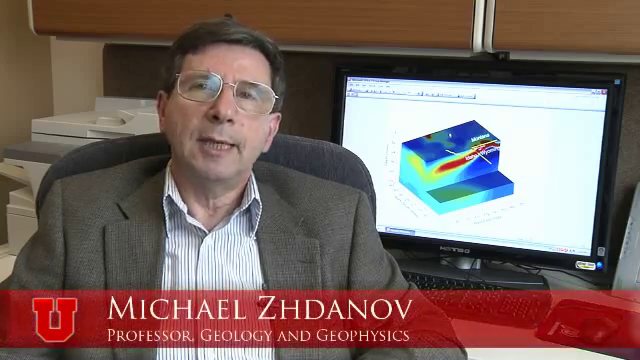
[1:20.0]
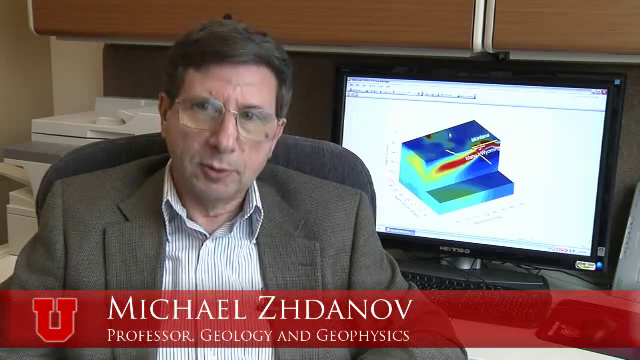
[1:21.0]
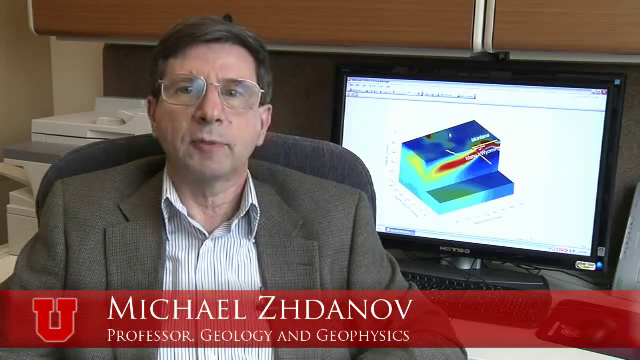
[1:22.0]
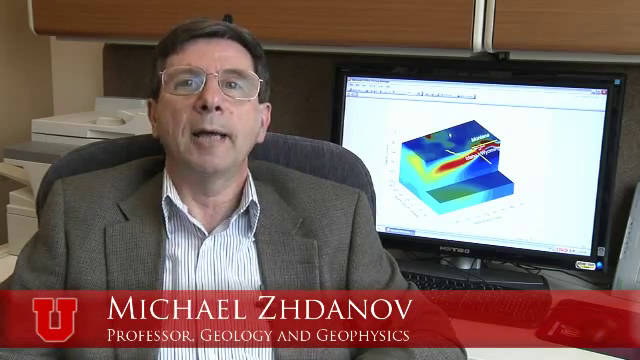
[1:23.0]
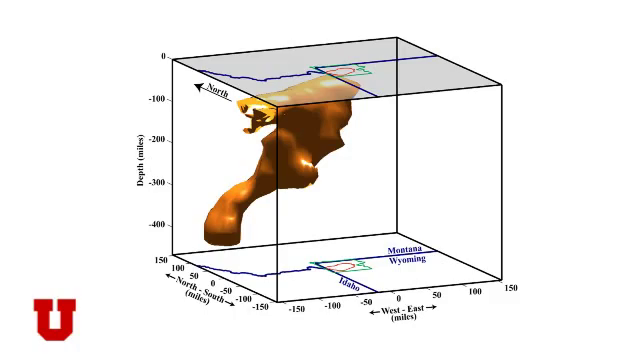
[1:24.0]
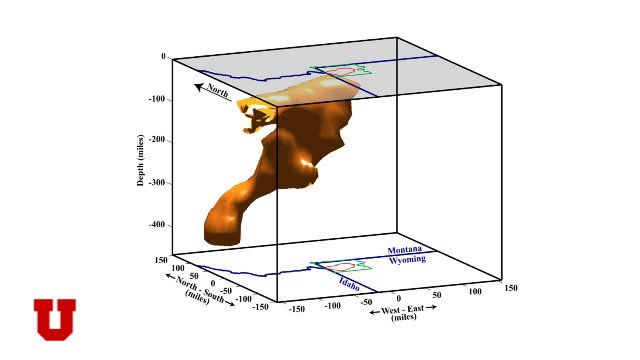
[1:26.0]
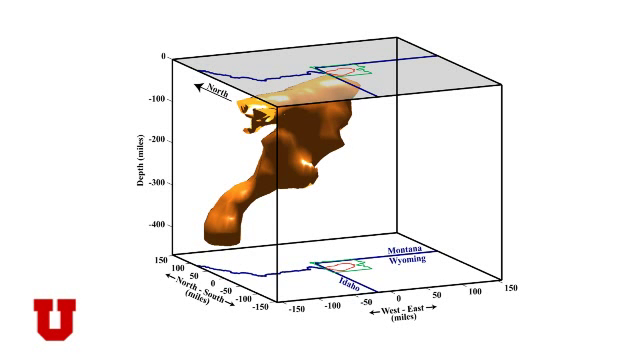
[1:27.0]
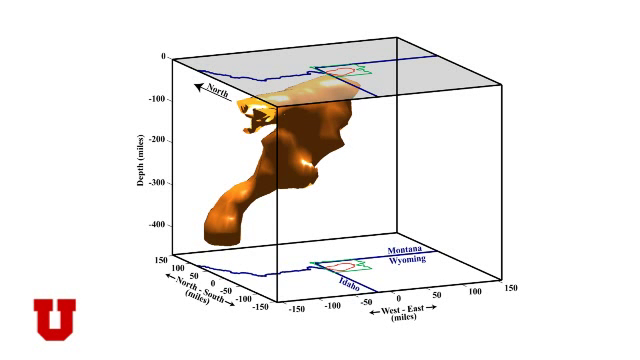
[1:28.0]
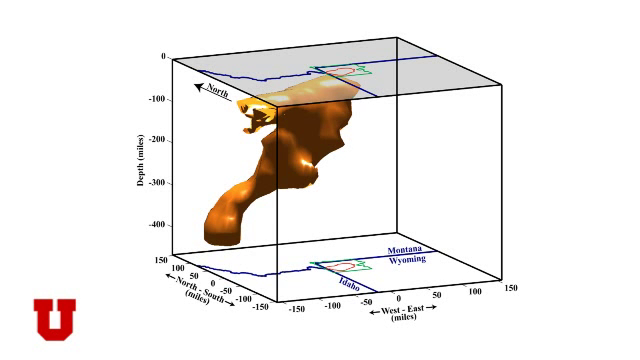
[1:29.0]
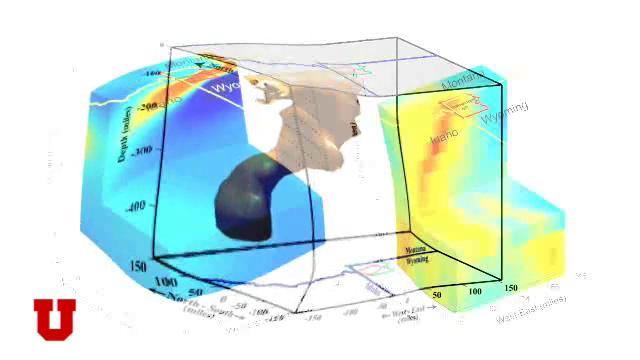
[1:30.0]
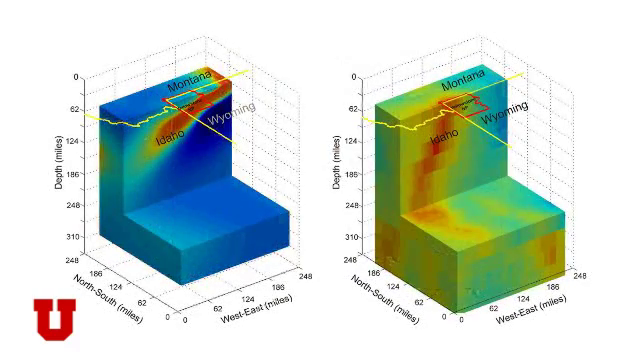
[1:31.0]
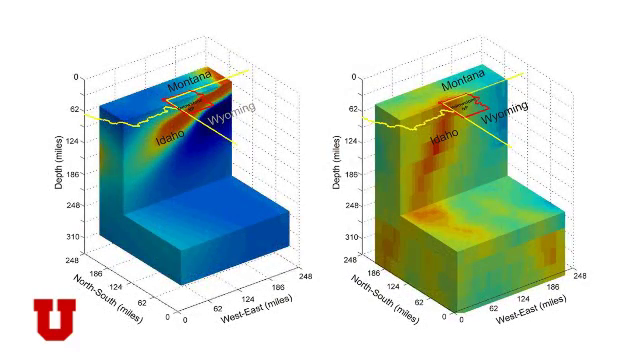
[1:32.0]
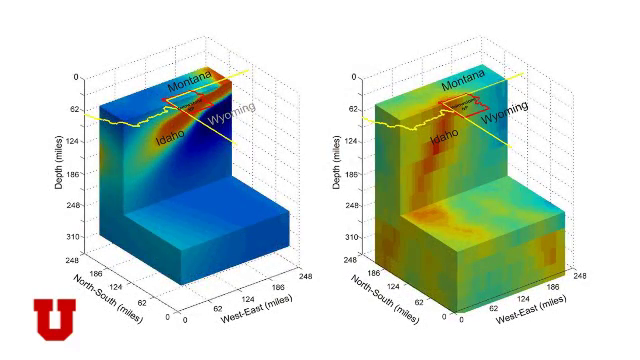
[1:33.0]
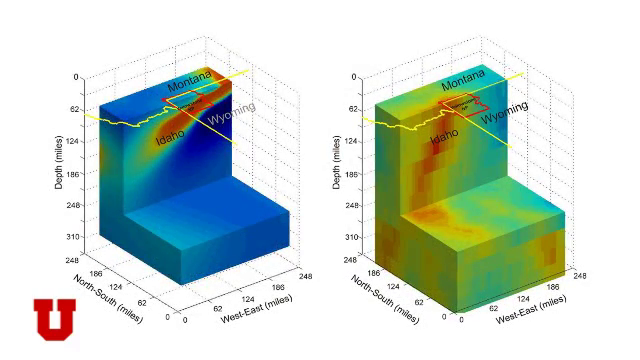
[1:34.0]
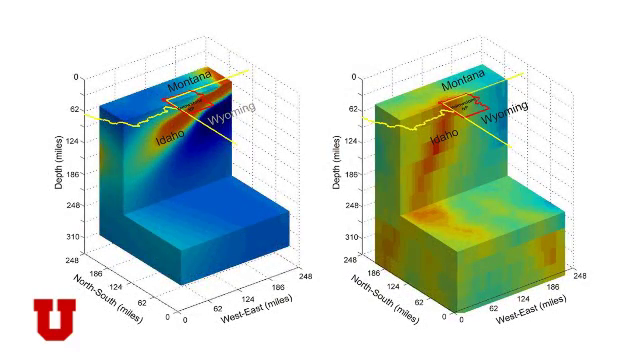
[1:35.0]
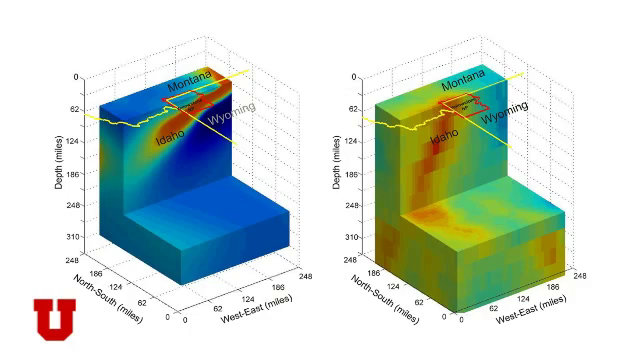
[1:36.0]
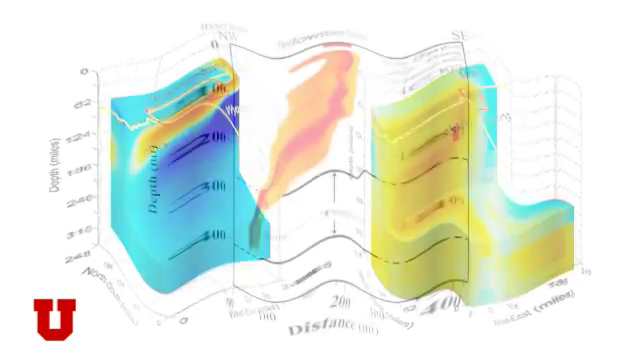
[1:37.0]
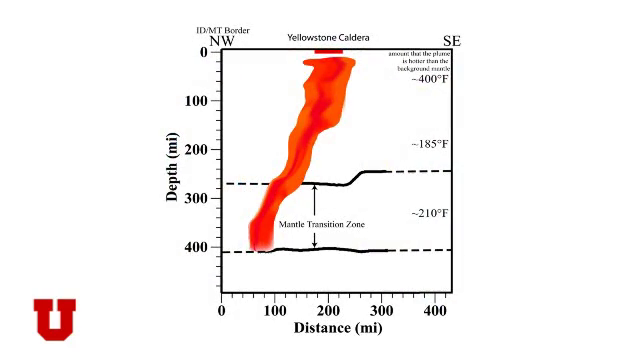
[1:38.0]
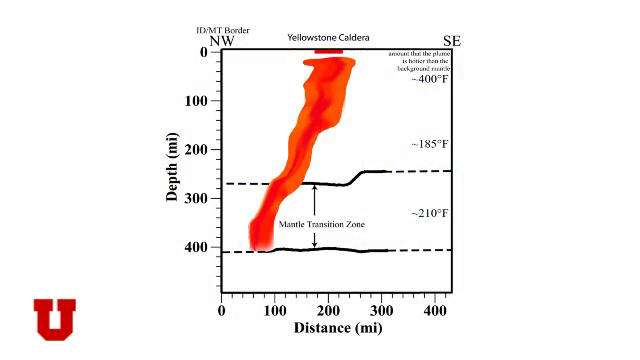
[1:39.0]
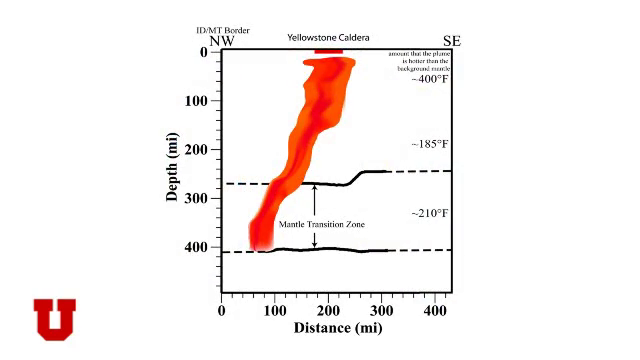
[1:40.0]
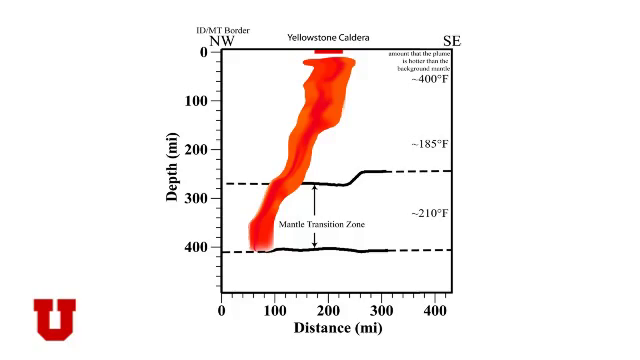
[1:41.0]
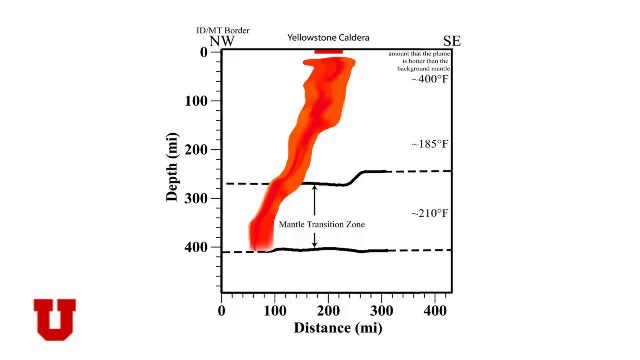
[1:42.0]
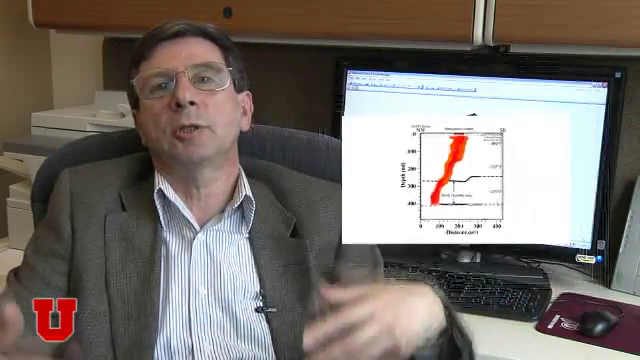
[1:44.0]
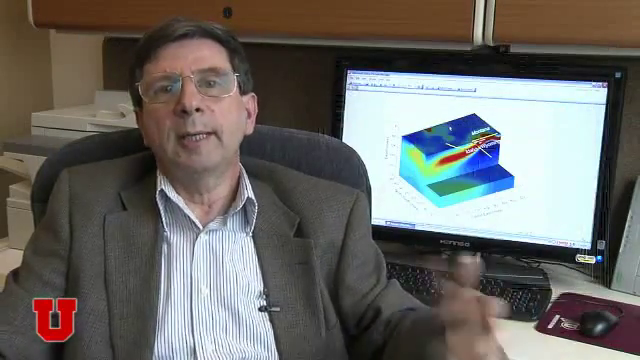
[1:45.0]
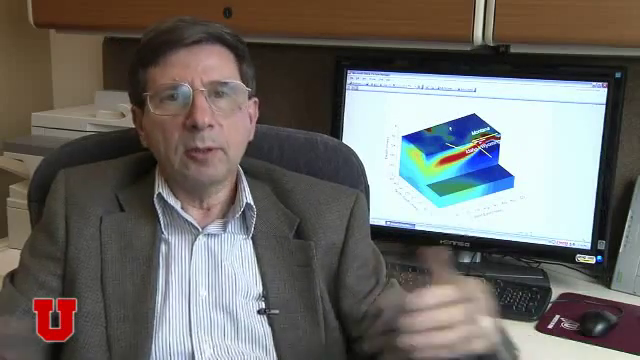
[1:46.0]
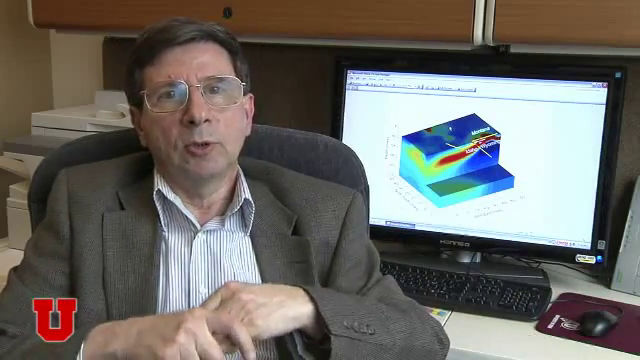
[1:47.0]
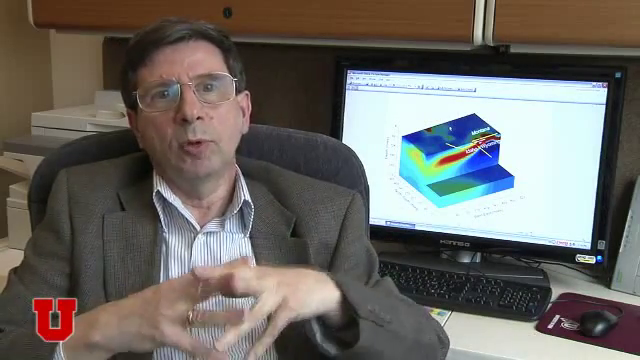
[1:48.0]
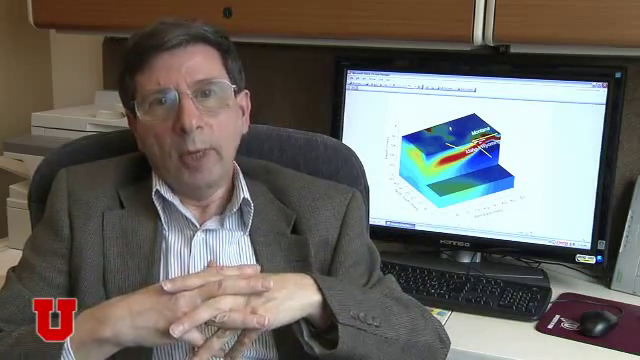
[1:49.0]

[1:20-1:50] Michael Vandhoff talks about another topography map, and a couple of different topography maps are shown. One seems to be a 3D model that looks like a root vegetable; it is orange, goes downward, and has a label that says "north." Another topography map has teal, blue, red and lime green with some white, and looks almost like a giant step. Michael Vandhoff continues talking. He is a white man with glasses, wearing a gray suit jacket and a white and blue striped button-down shirt.